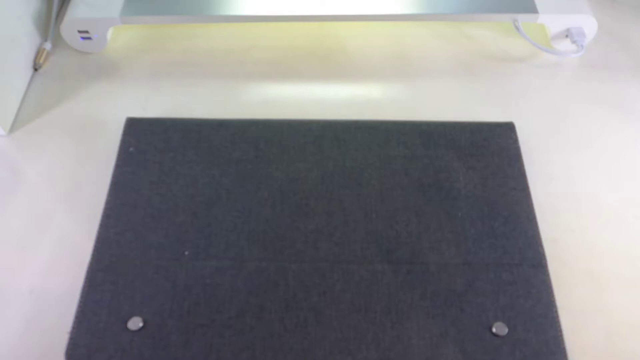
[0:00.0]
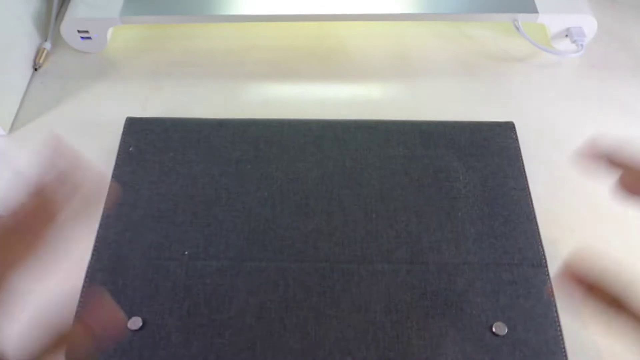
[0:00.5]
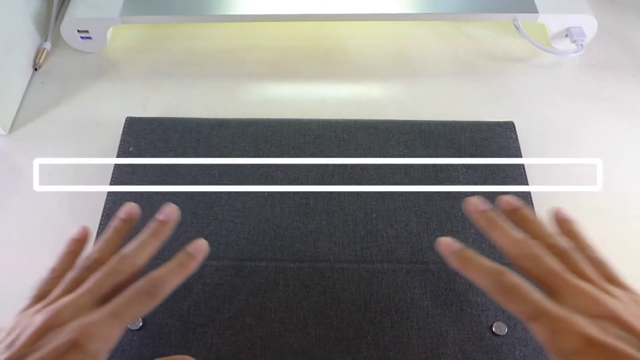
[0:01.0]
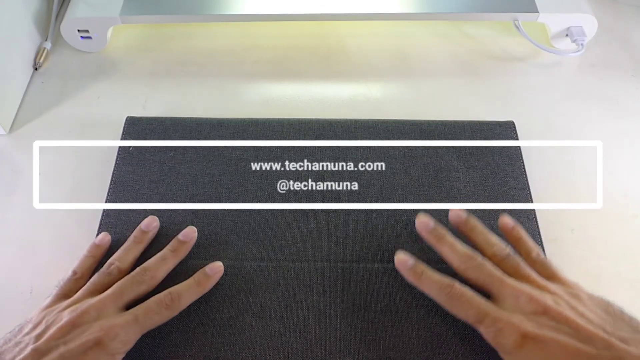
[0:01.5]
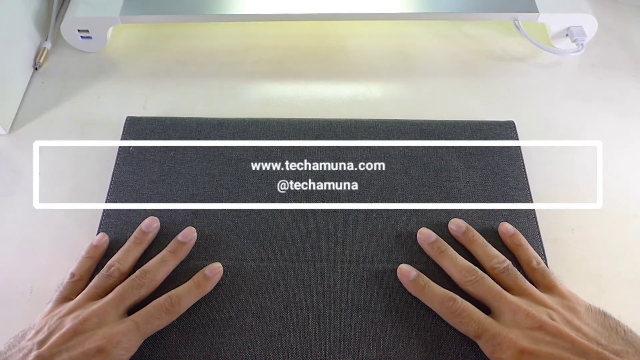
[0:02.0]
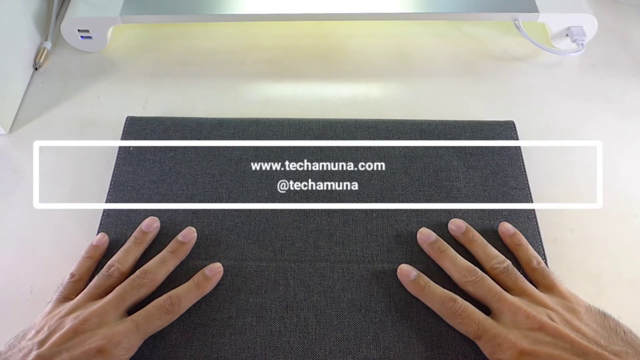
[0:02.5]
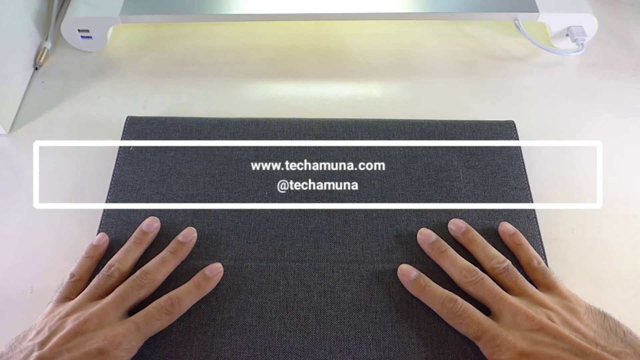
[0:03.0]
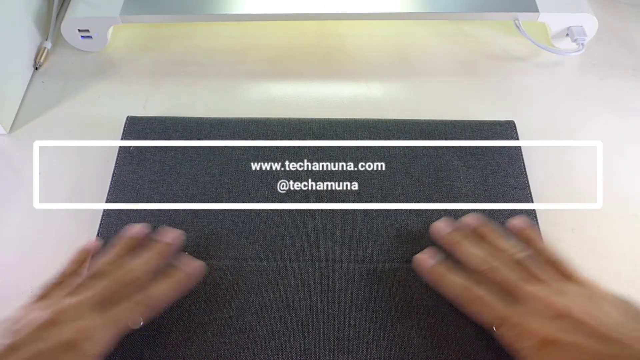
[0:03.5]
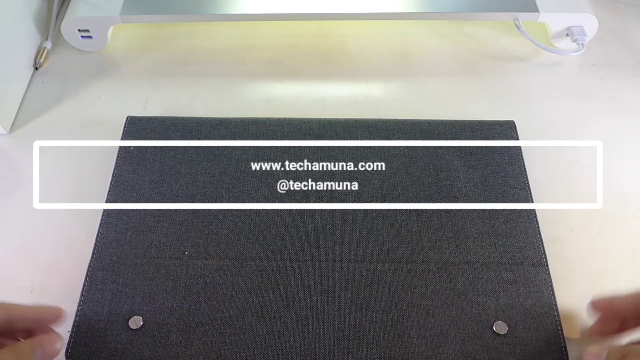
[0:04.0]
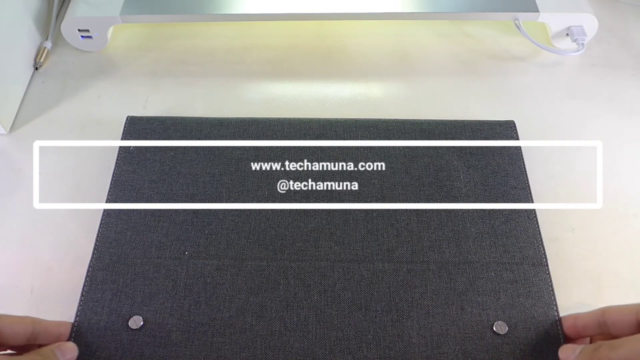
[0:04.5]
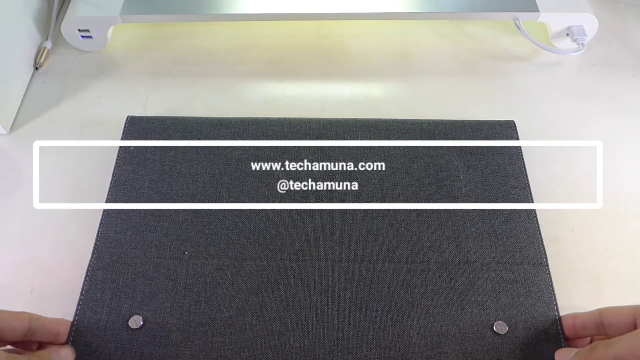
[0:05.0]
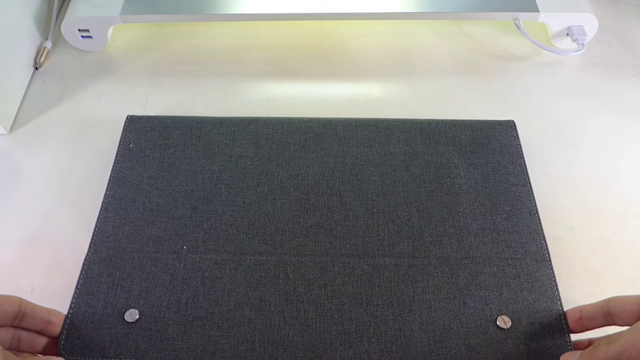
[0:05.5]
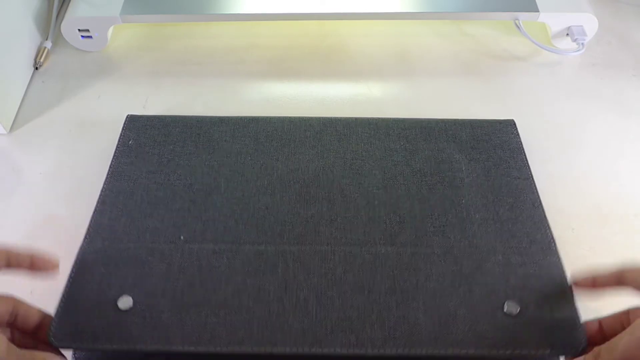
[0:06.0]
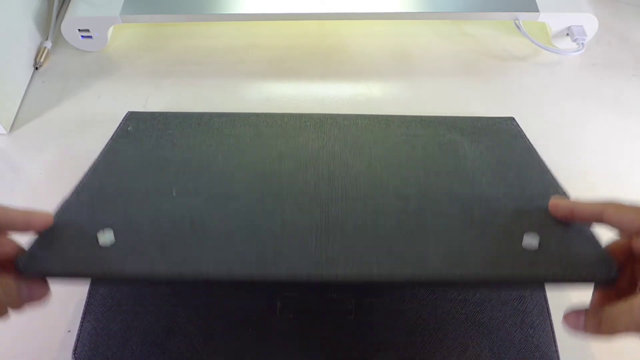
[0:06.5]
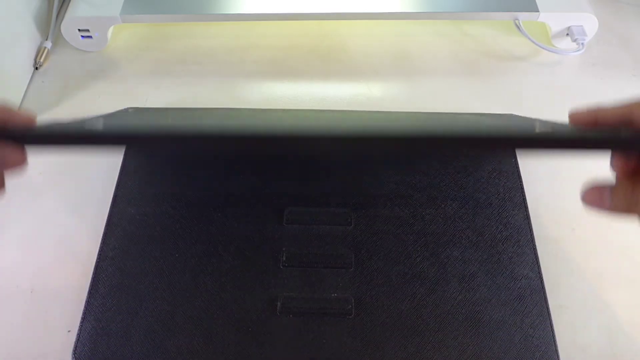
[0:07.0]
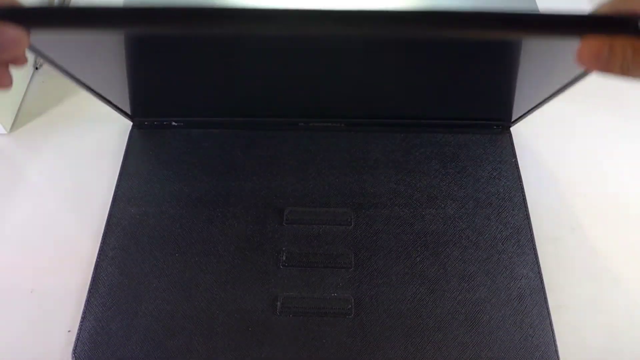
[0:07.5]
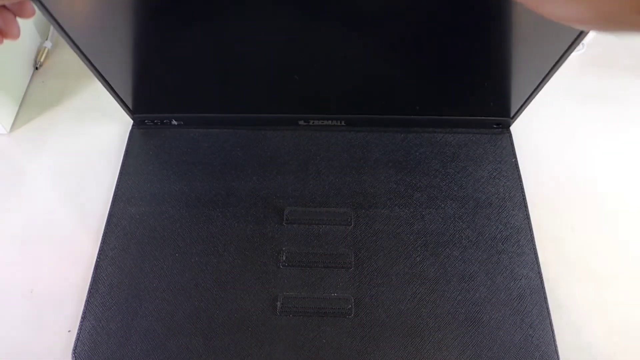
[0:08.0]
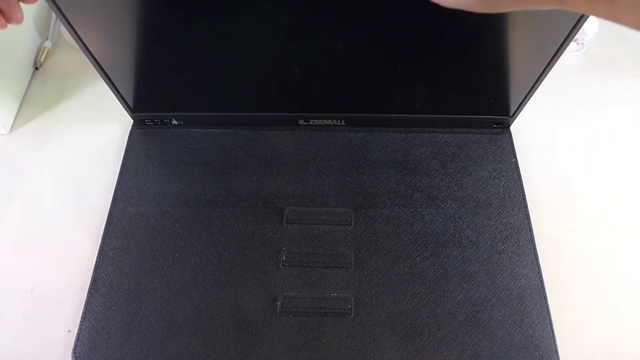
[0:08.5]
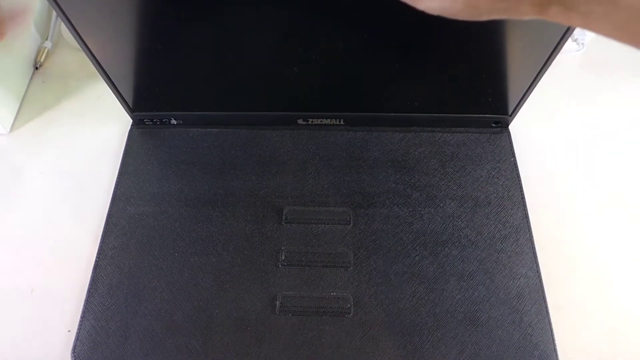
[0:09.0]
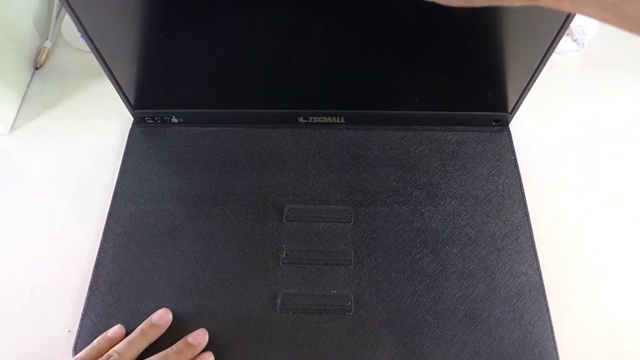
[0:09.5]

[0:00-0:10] The frame is slightly wider than it is tall, and the view looks down onto a white table from an angle between a top-down and a side view. In the center of the table is a rectangular black object that appears to be either a box or a laptop. Two hands come in, one from the left and one from the right corner. A white overlaid rectangle sits in the center of the frame, very wide and not very tall, maybe about 20 percent of the frame's height, showing the website "www.tekamuna.com" and "at tekamuna". The hands rest on the box and then open it; it does appear to be a laptop, and its screen comes into view.